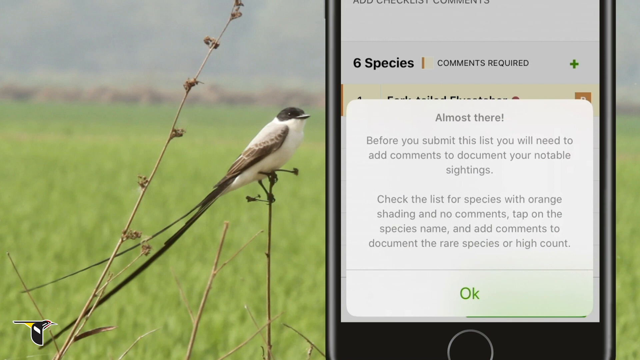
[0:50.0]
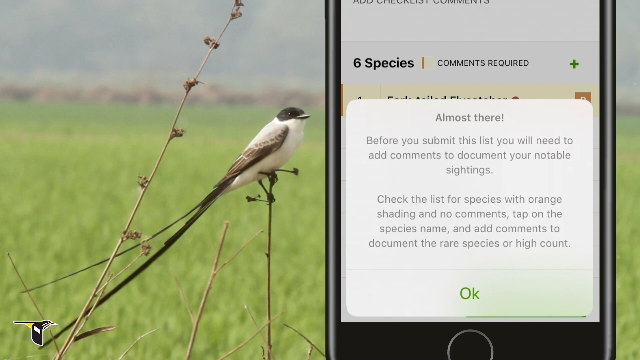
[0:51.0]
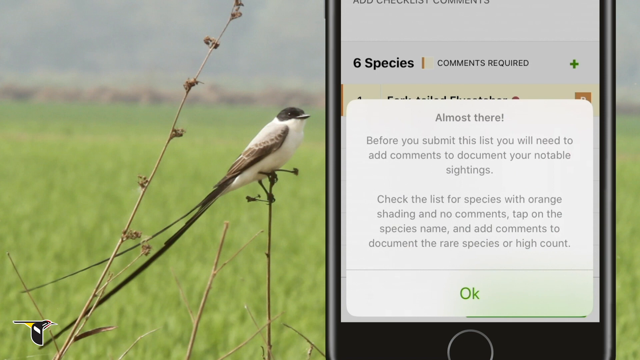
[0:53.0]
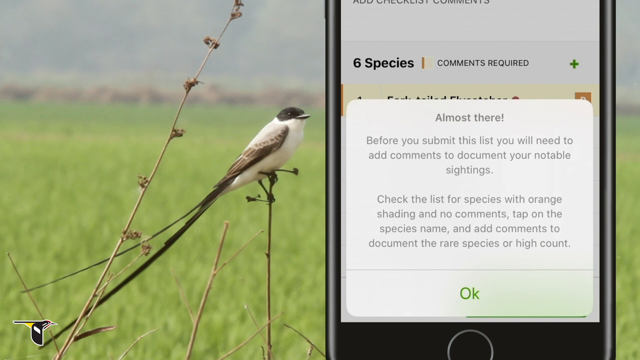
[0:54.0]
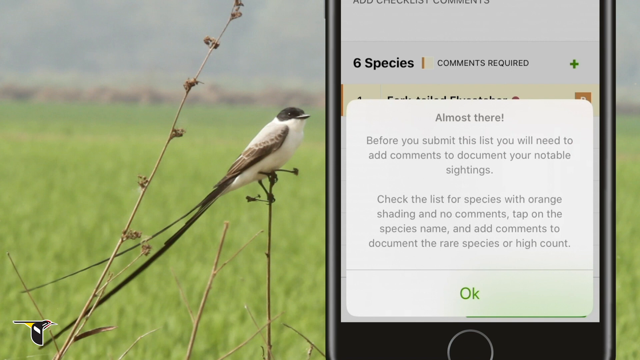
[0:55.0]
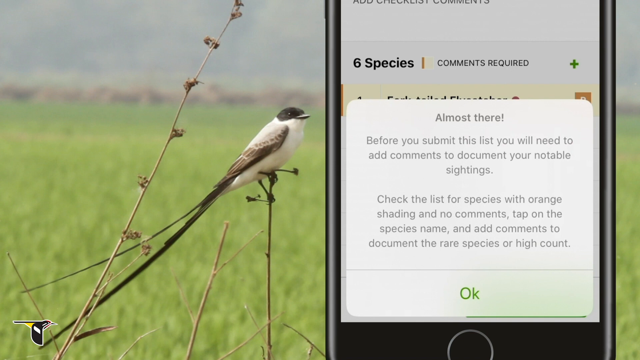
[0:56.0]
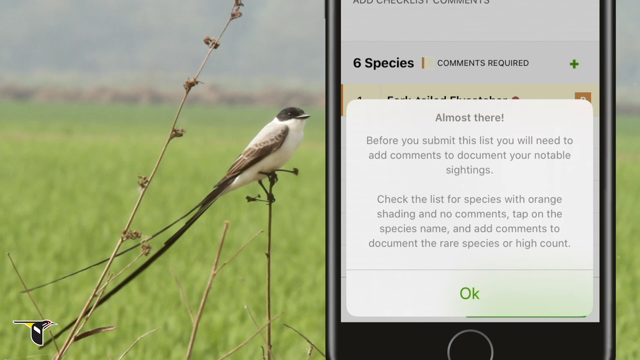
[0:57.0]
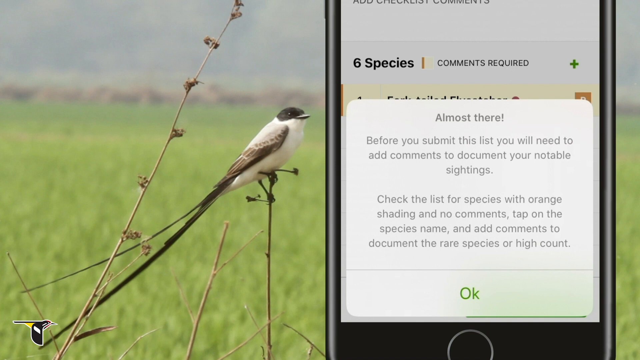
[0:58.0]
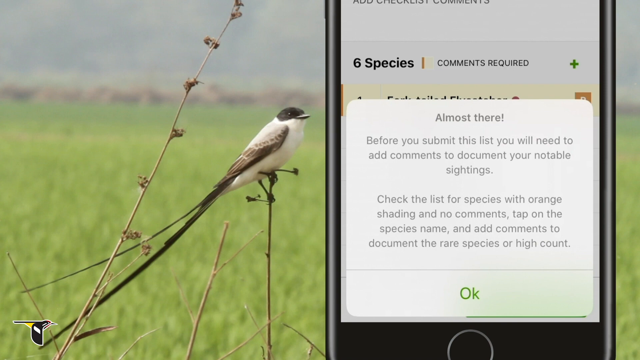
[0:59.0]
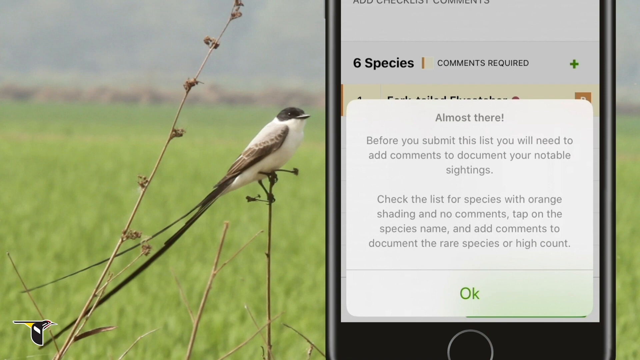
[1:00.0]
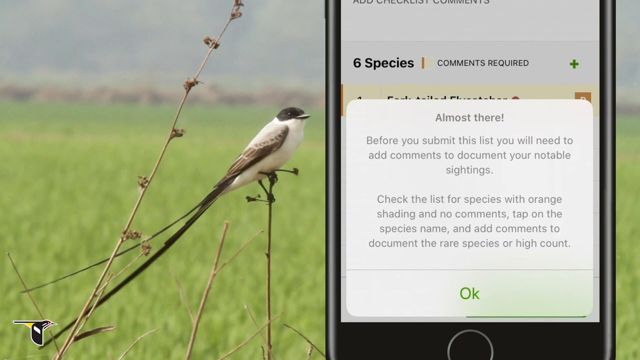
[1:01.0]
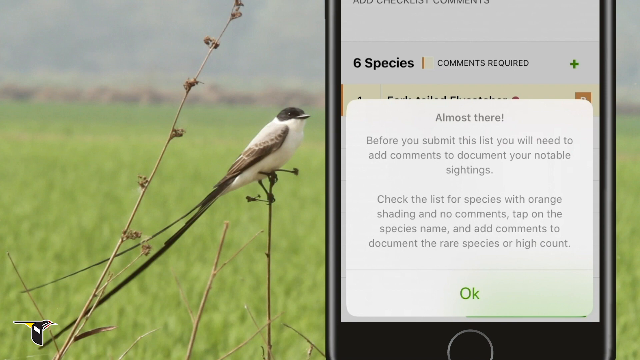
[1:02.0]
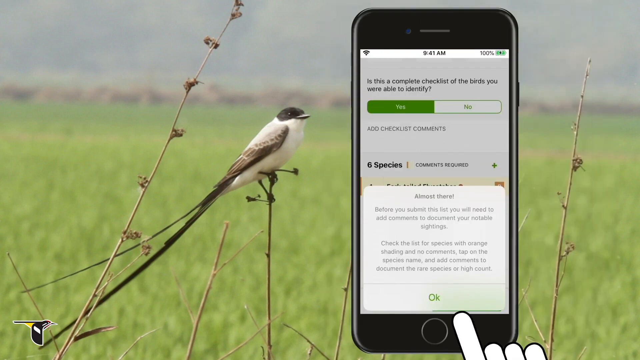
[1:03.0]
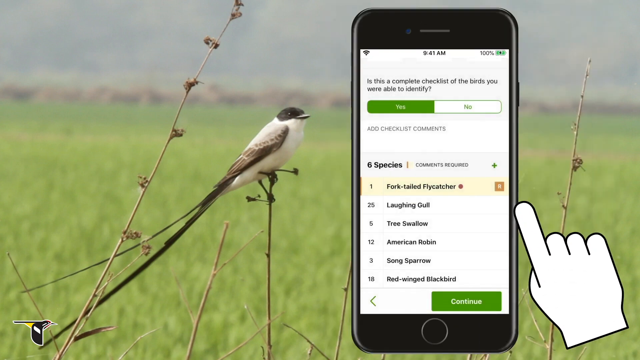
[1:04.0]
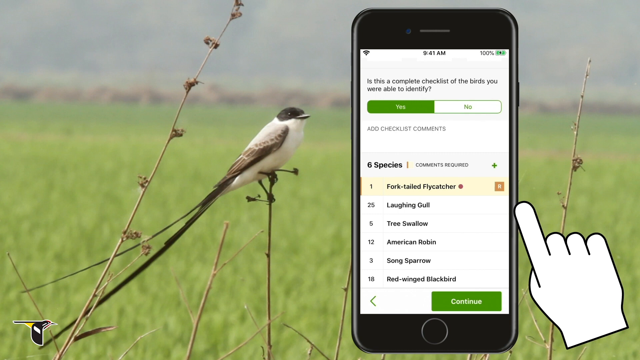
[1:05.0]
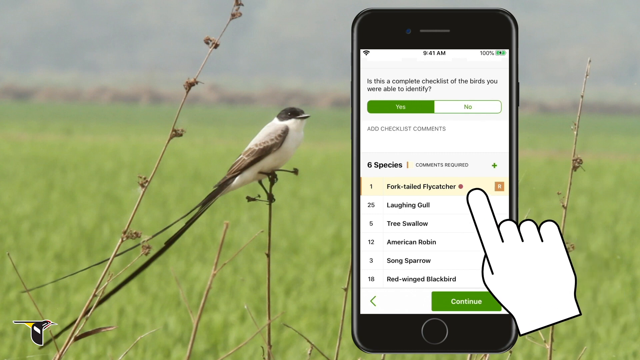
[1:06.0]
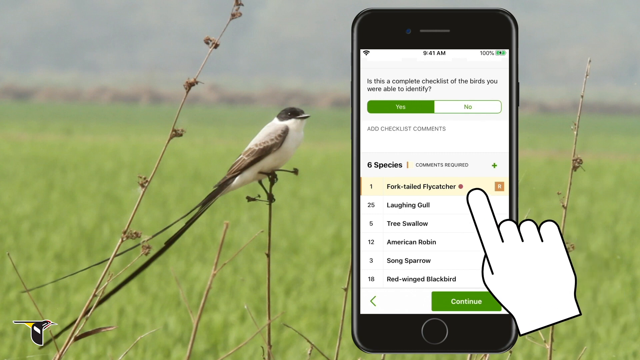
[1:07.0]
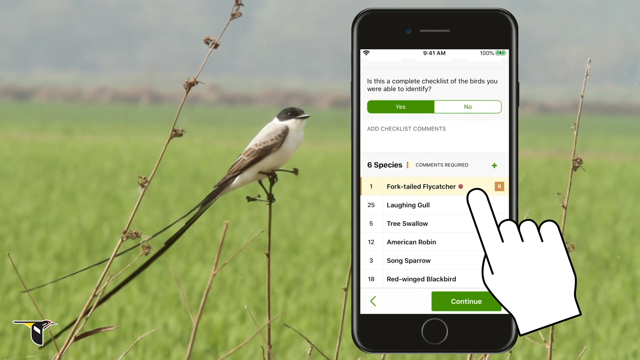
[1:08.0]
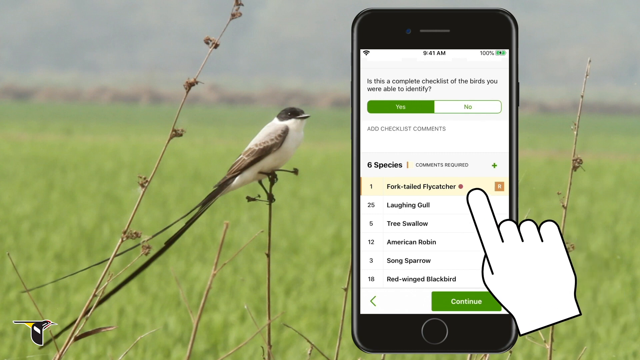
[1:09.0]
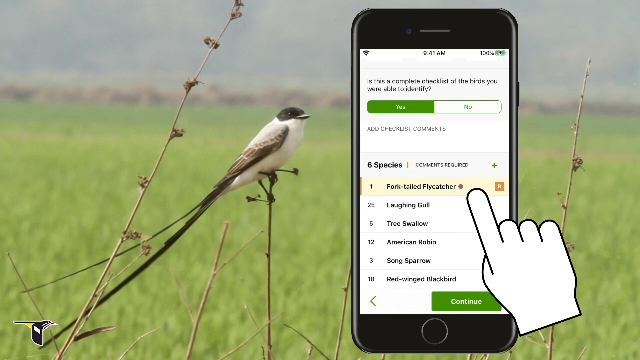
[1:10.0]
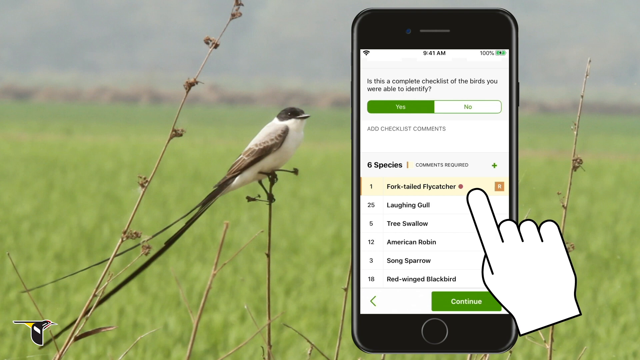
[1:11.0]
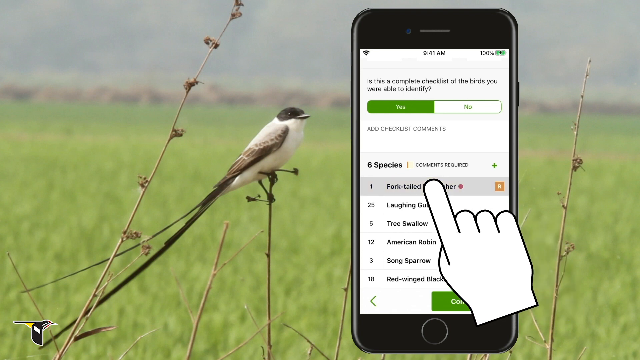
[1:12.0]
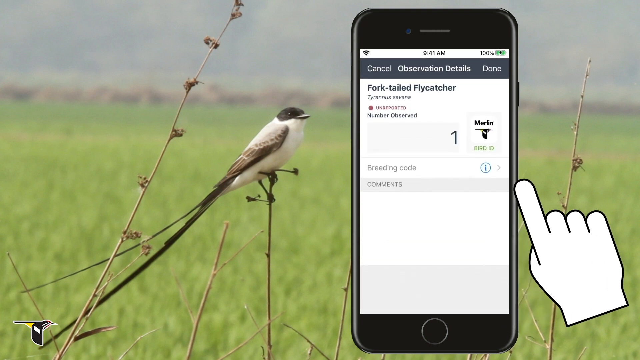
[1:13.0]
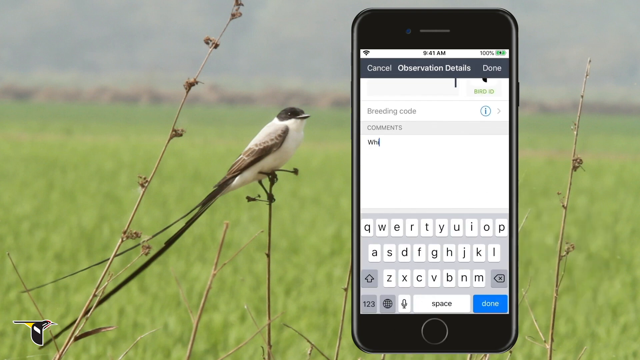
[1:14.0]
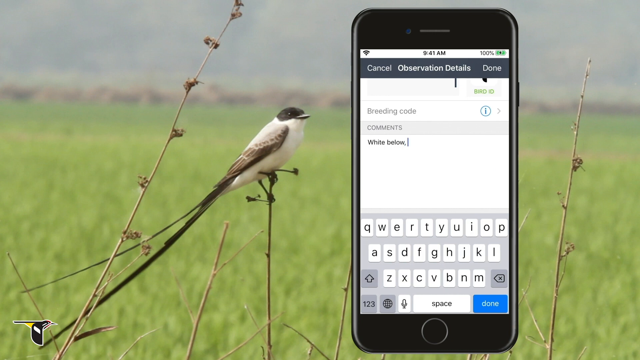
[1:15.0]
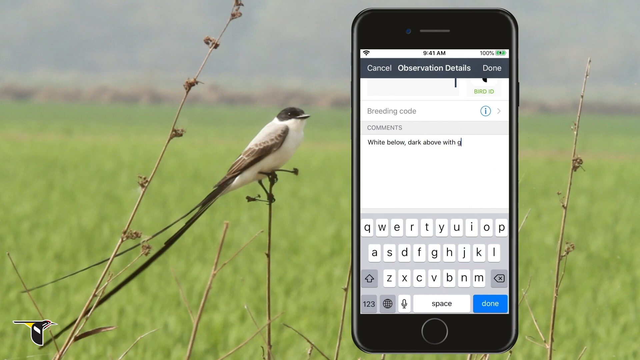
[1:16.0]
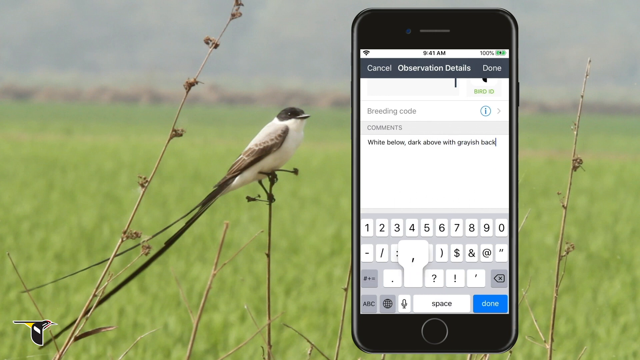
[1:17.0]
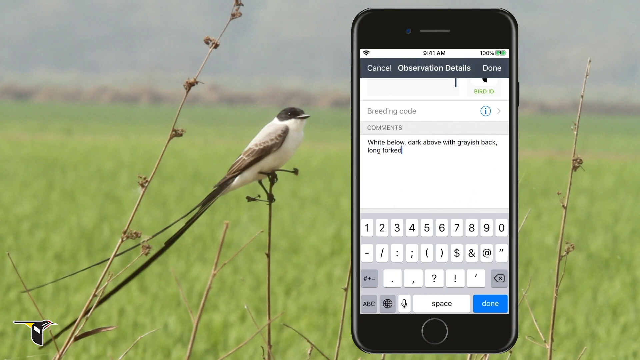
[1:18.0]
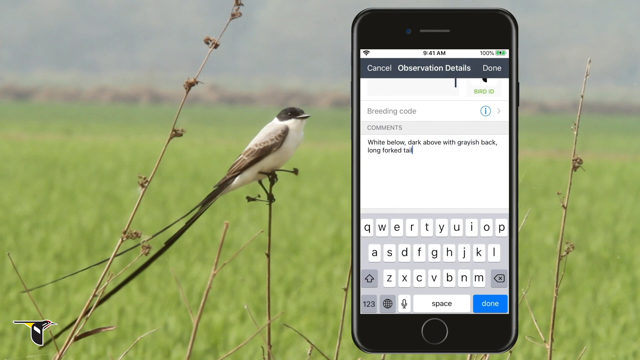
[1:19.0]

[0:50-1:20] The fork-tailed flycatcher, white with brown wings, a long black tail and a black head, appears in a shot similar to an earlier one, while the app operates on the right-hand side of the screen as the entry is put in. A note on the screen says "almost there, before you submit this list, you'll need to add comments" and "Check the list for species with orange shading and no comments." It also gives instructions to tap on the species name and add comments. A page called "observation details" appears, where the user can add comments about the sighting, with notes on how to operate the application. The view then returns to the species list, where the currently identified bird can be selected.